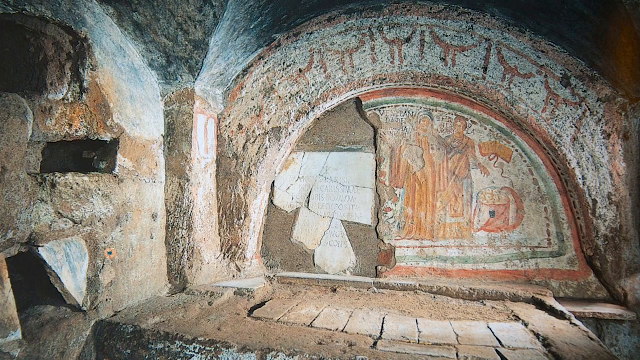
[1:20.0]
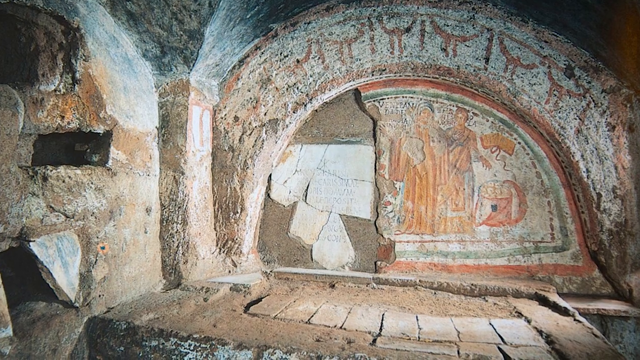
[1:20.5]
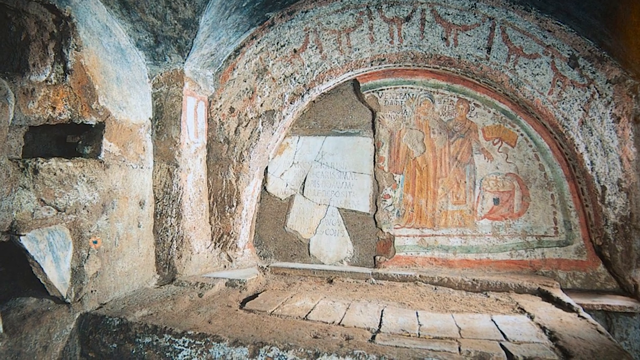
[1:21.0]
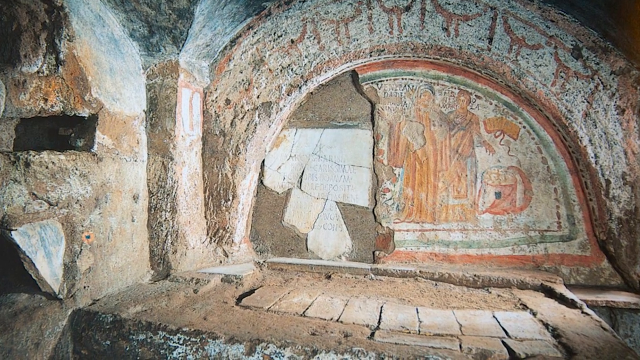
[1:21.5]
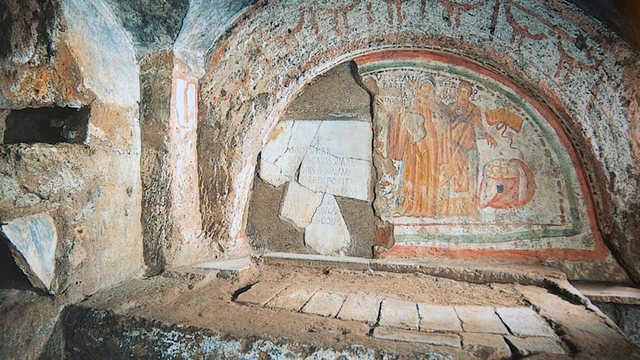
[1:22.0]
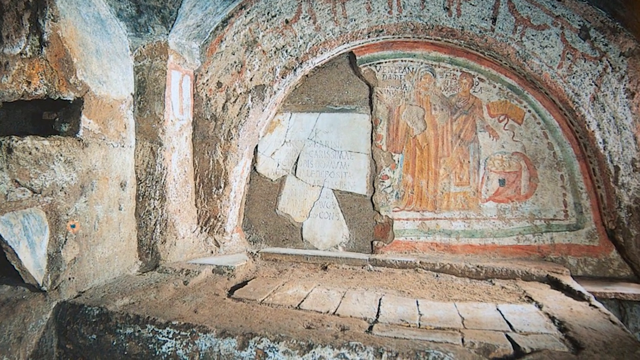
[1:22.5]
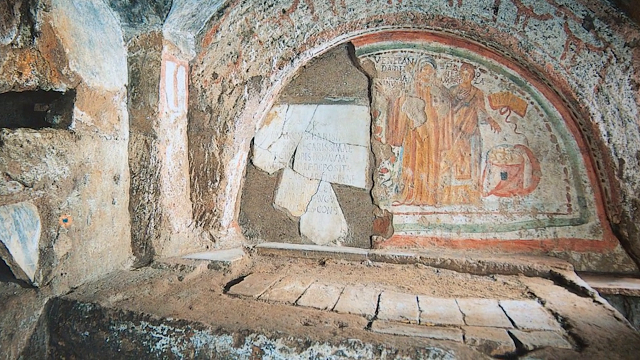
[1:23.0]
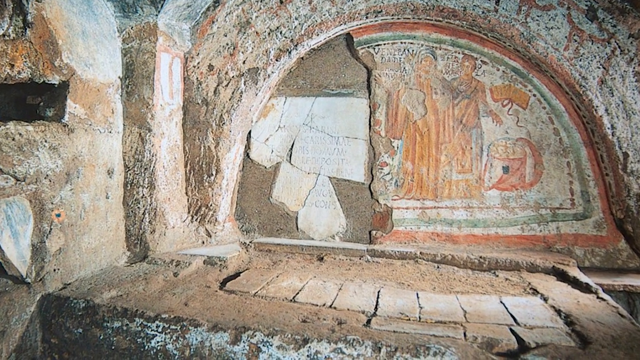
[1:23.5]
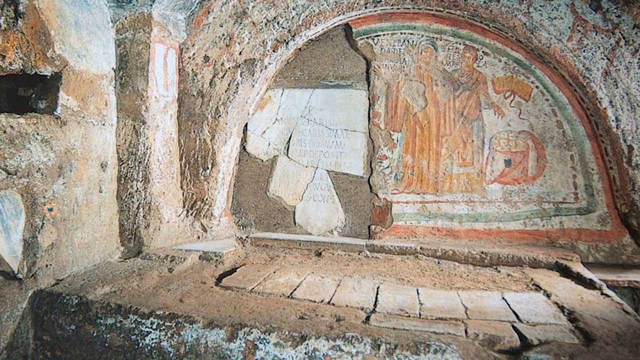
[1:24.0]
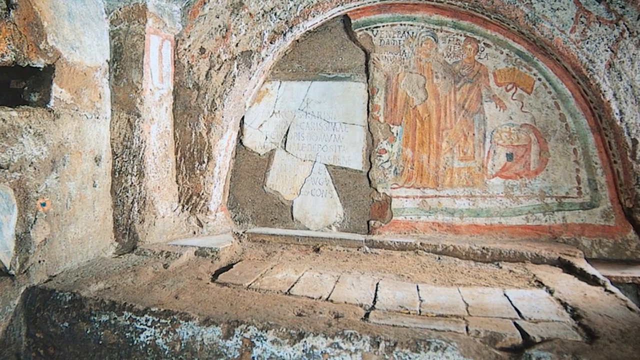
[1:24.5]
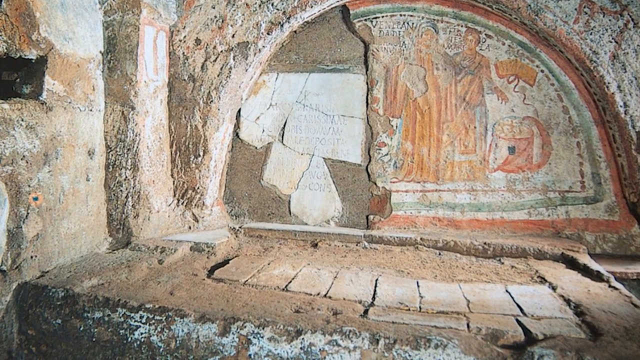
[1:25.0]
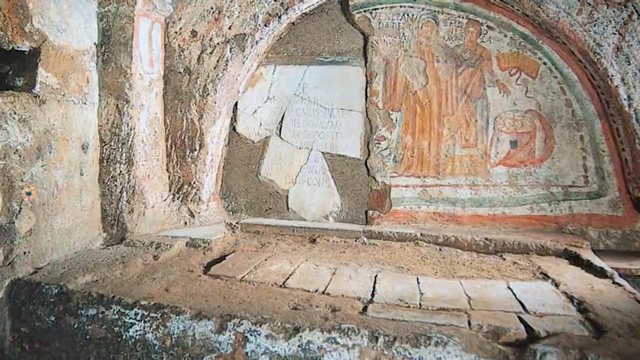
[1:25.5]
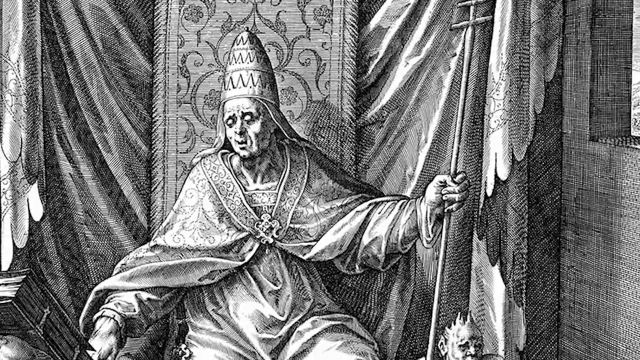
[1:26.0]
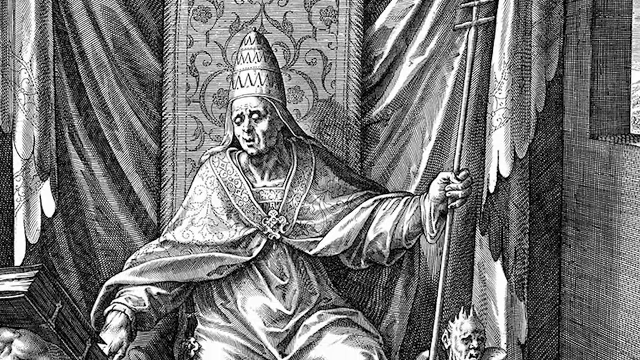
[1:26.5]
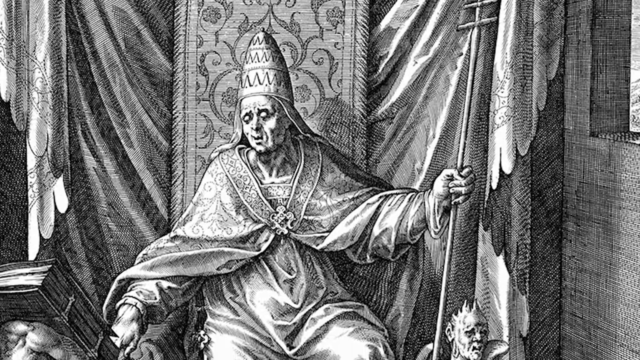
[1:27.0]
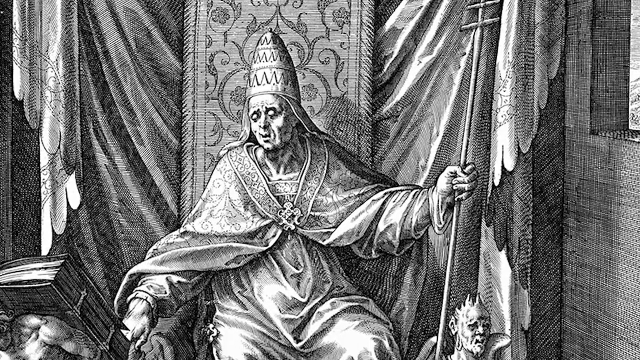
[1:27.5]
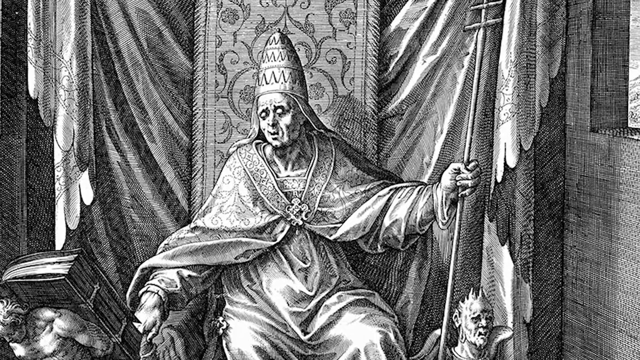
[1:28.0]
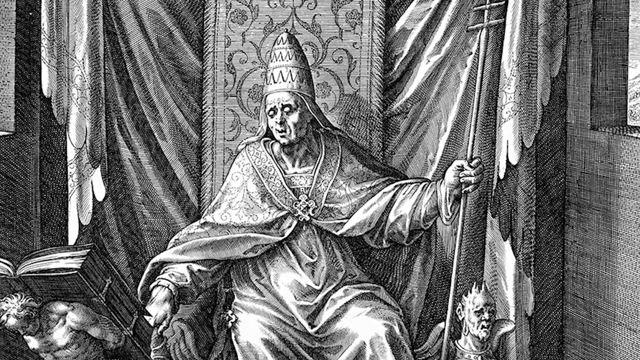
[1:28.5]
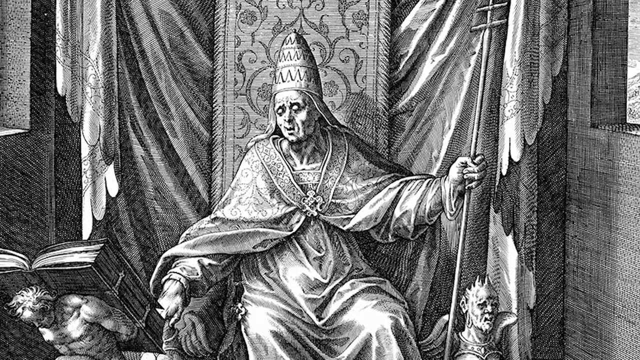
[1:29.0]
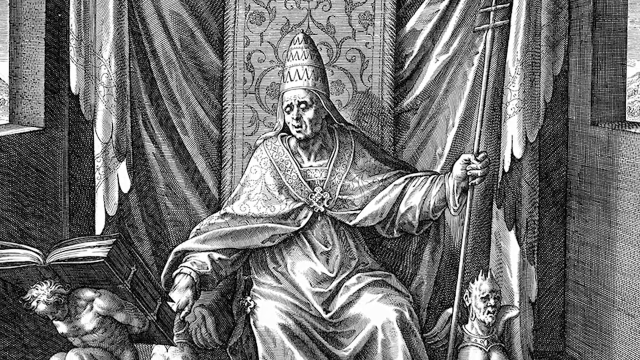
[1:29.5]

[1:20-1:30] Still images continue. The first looks like the inside of some sort of cave or very old building. On the wall is an old, disheveled mural made of a collection of tiles that look as if they have been broken and pieced back together, with some pieces missing; women are painted in colour on the mural. The next image is a black-and-white drawing of an old man who is potentially a priest. The final image shows two men looking at each other and holding some sort of plant.